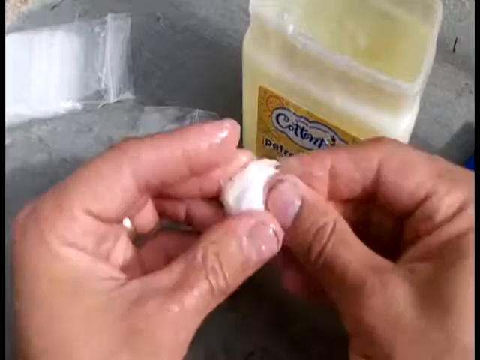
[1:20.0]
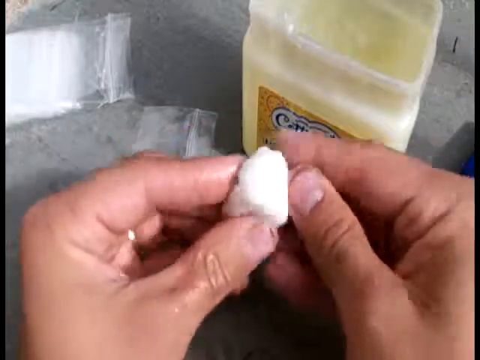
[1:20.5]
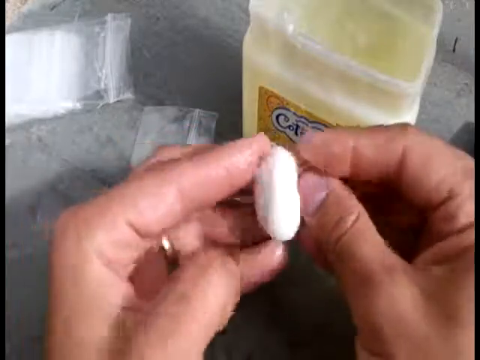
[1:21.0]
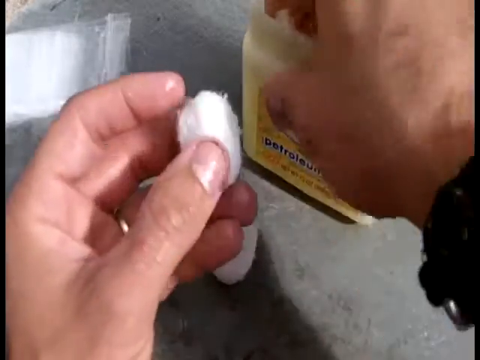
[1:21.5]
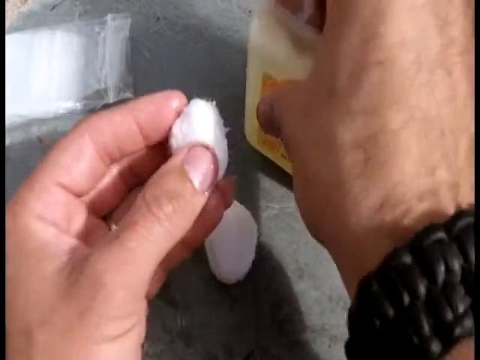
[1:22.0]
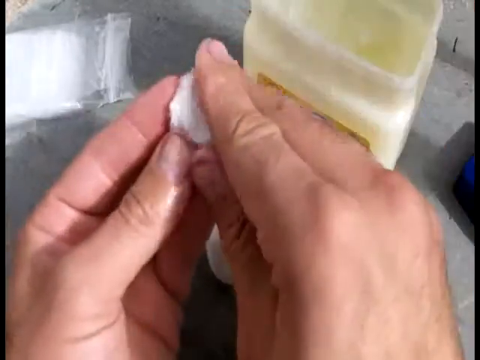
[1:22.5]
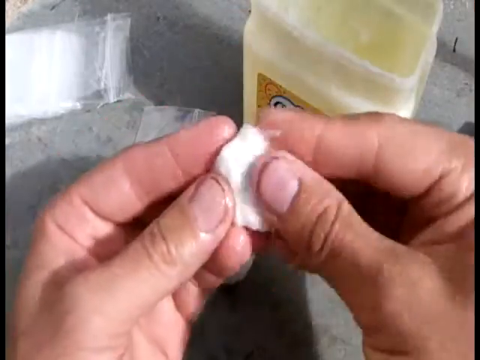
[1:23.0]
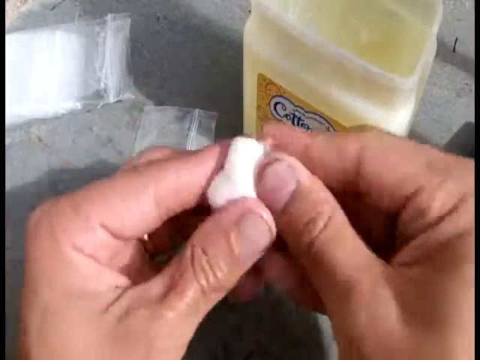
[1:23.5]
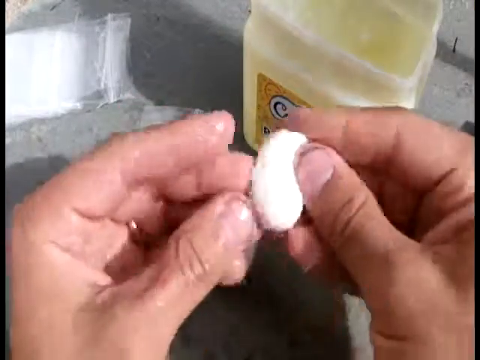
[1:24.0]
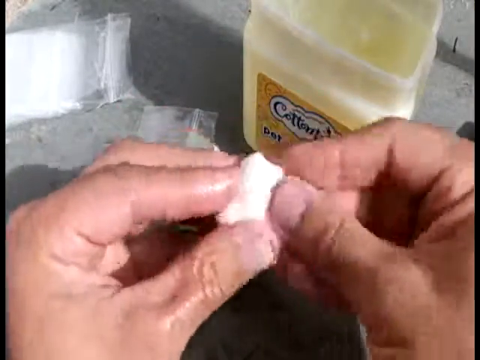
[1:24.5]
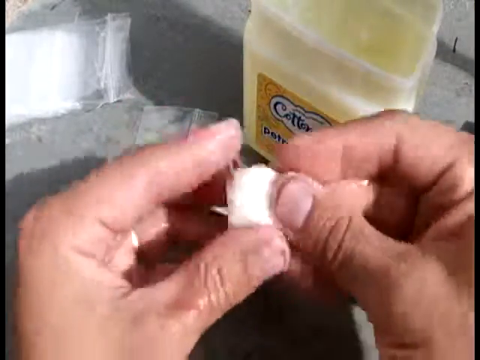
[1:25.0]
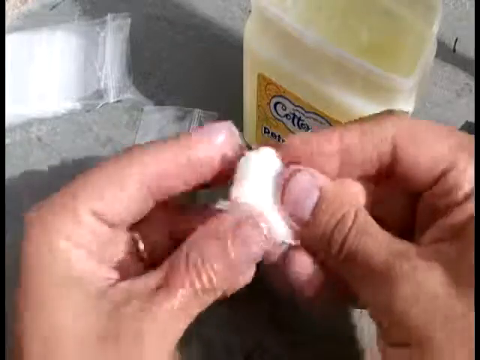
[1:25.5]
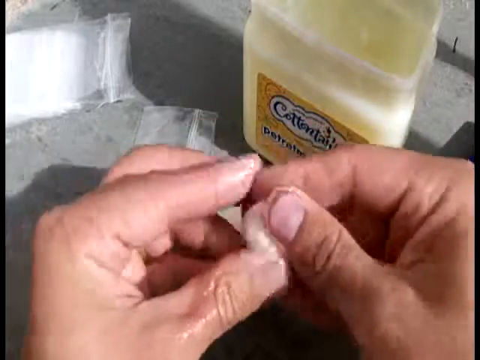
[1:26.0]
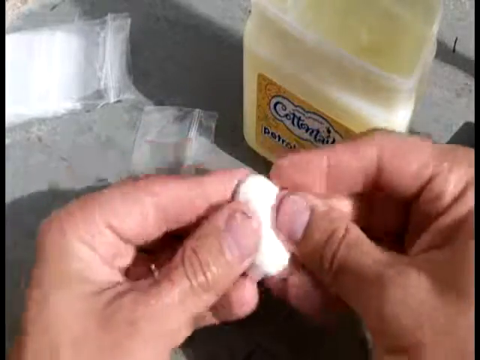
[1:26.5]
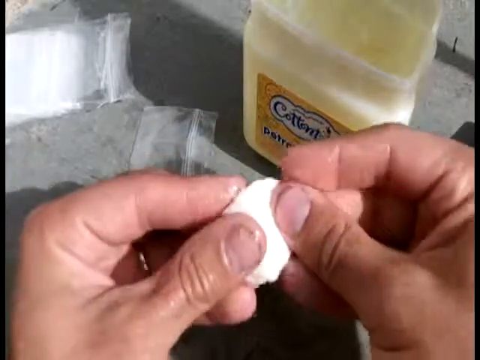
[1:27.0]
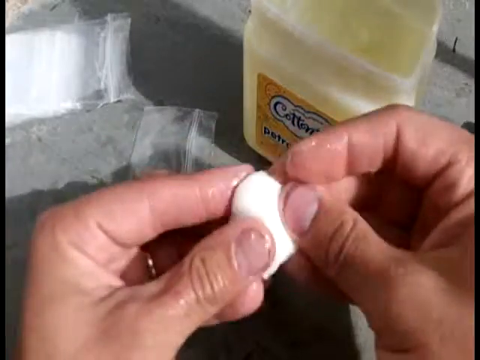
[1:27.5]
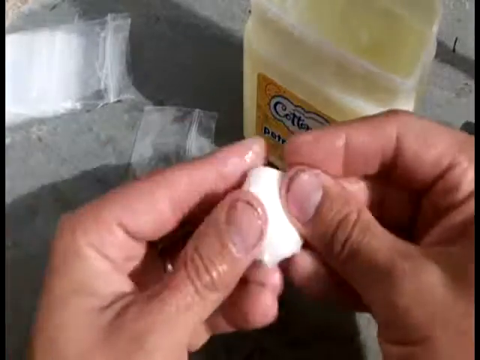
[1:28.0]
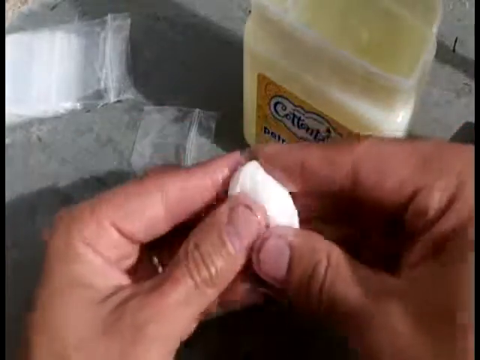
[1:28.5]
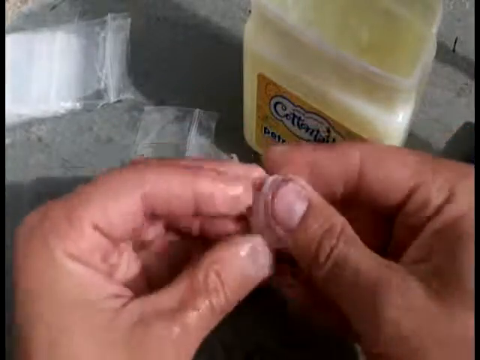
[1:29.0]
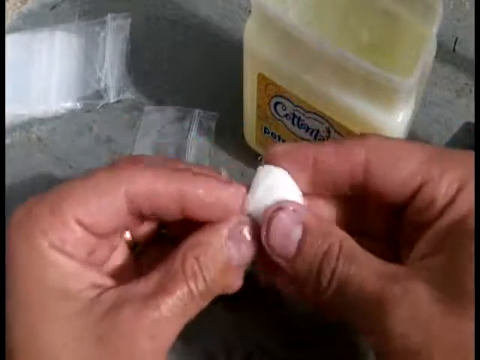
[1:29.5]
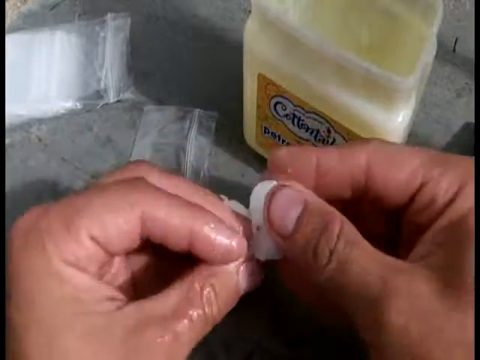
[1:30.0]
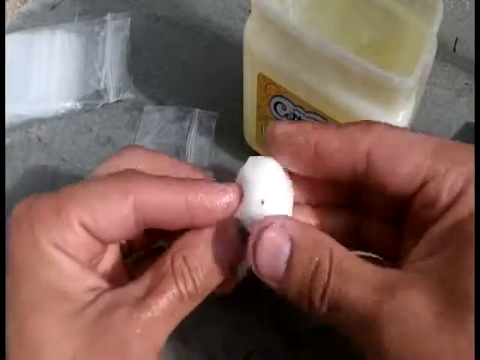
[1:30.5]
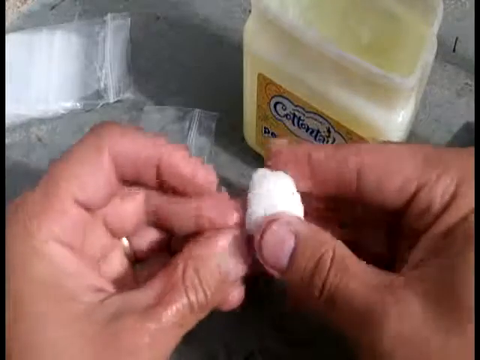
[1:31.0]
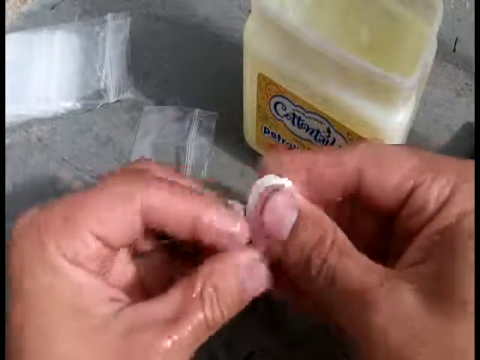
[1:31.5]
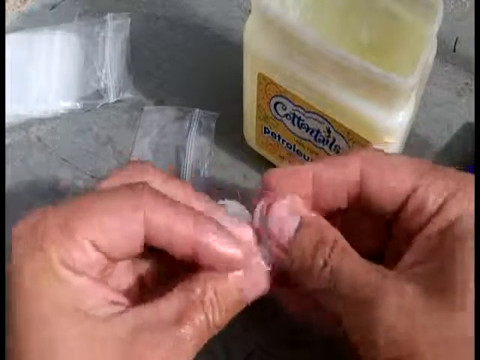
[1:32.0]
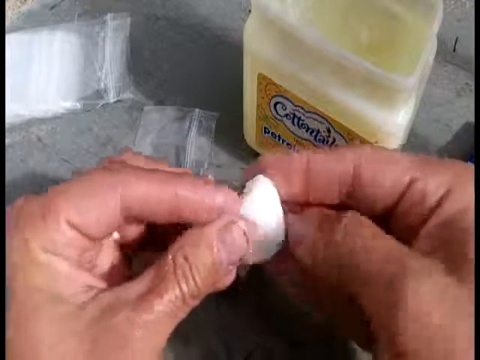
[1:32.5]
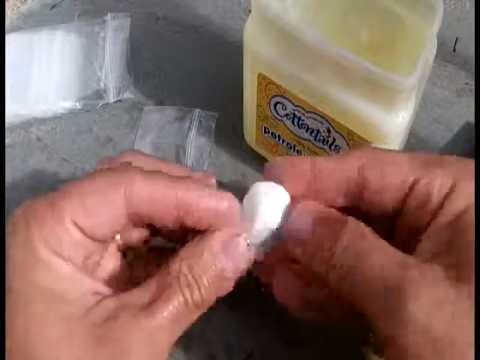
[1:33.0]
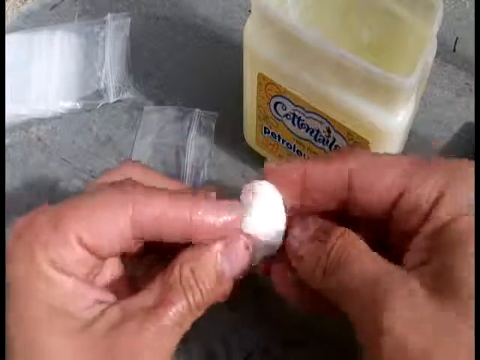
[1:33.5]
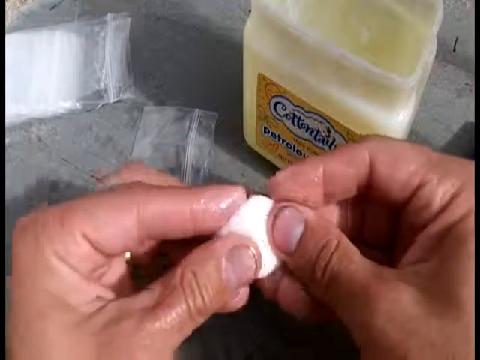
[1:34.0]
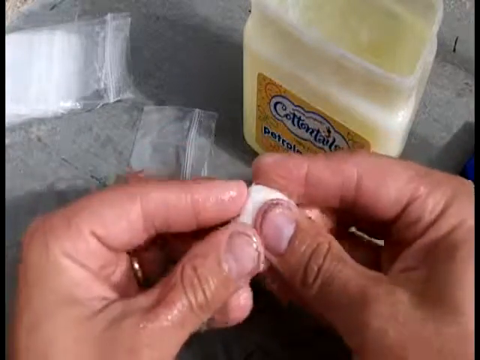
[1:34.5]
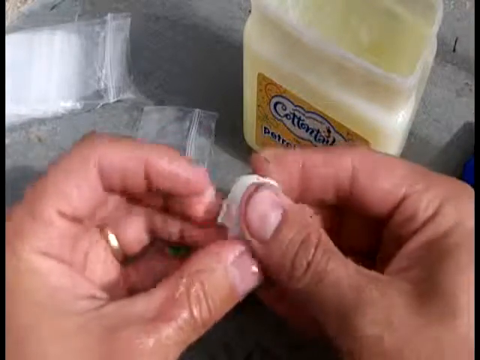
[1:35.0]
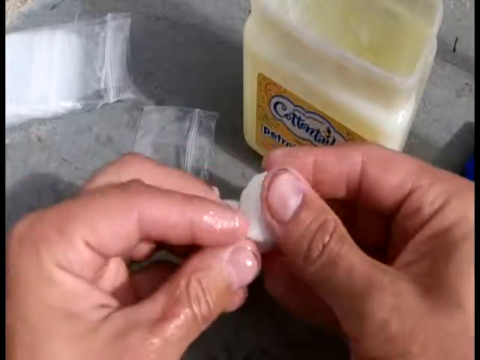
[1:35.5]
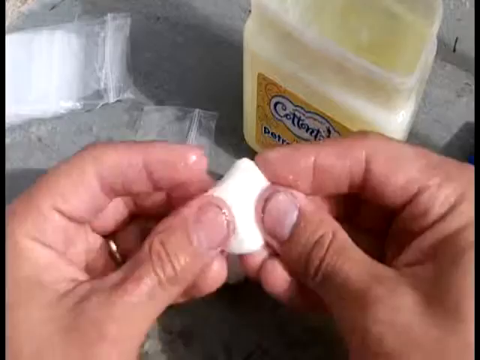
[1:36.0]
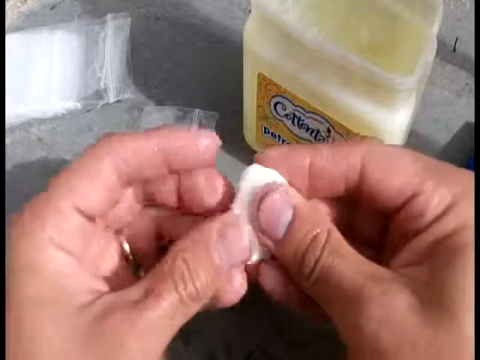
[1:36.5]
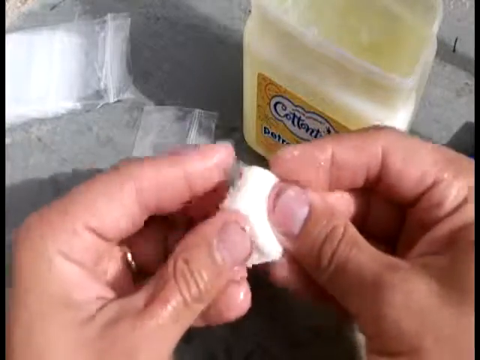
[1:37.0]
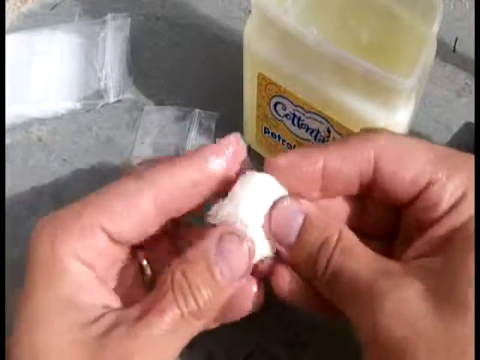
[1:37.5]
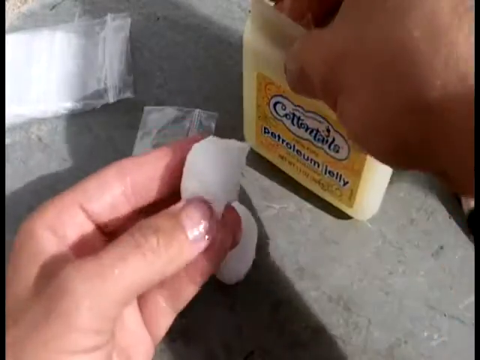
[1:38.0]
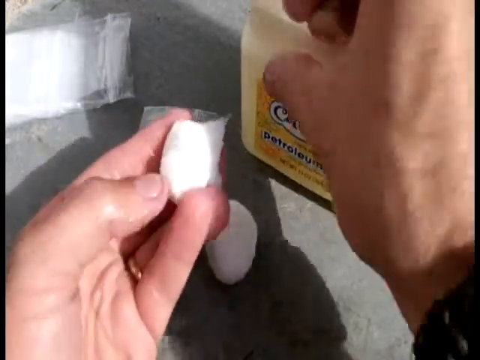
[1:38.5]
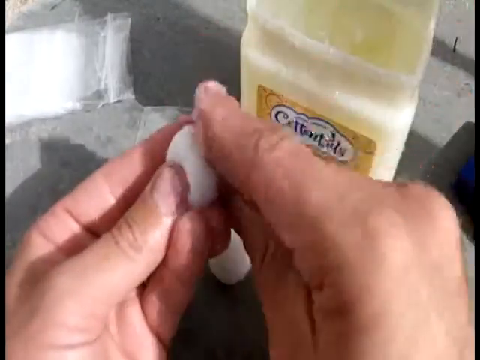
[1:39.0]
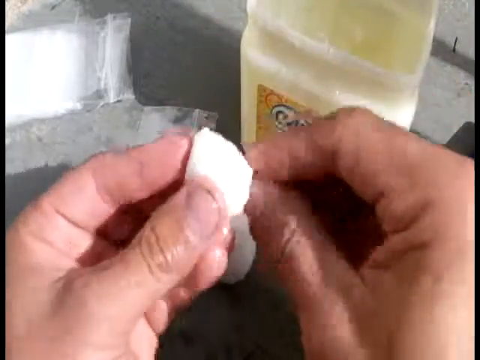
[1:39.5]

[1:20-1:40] A close-up shows a pair of hands holding a small white cotton ball, rotating it between the fingers of both hands. The right hand dips its fingers into the jar of light yellow petroleum jelly, picks up a small scoop, and rubs it directly onto the cotton ball. The hands rotate the cotton ball so it gets coated all over and keep rubbing the petroleum jelly in, using the thumb and index finger to gently rub and massage the ball while continuing to rotate it. The cotton ball begins to look smaller and sleeker rather than soft and fluffy. The fingers dip back into the jar, pick up another scoop, and rub it right onto the cotton ball.